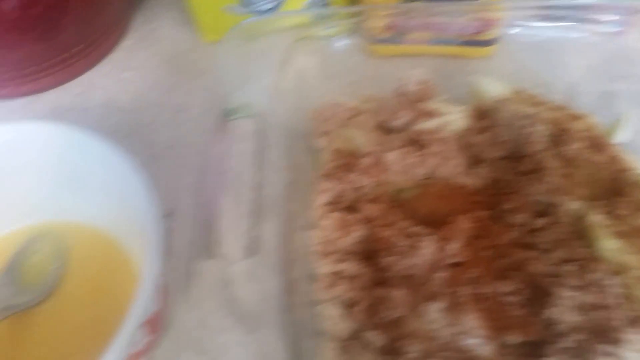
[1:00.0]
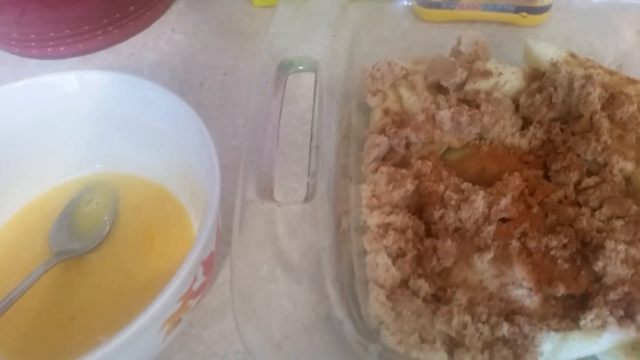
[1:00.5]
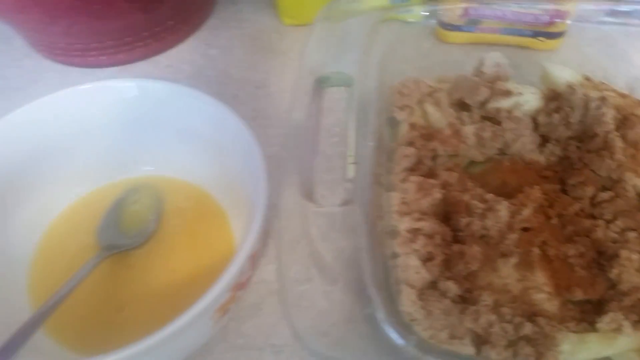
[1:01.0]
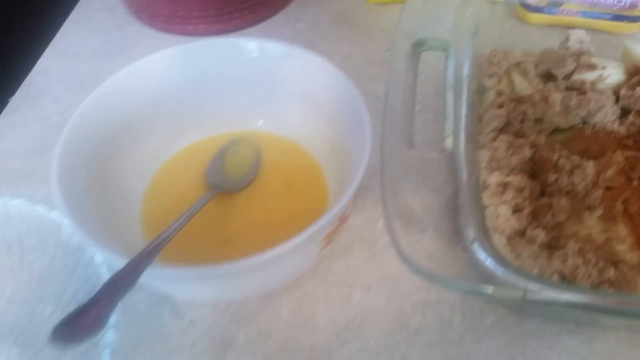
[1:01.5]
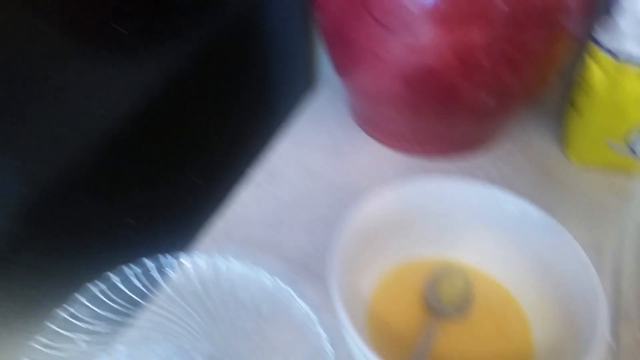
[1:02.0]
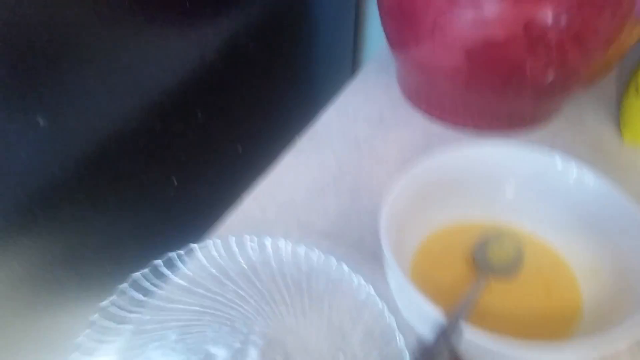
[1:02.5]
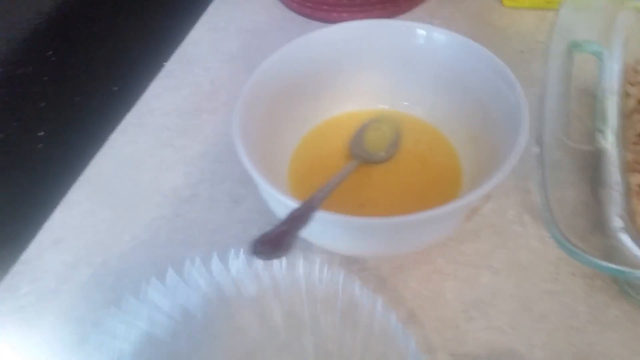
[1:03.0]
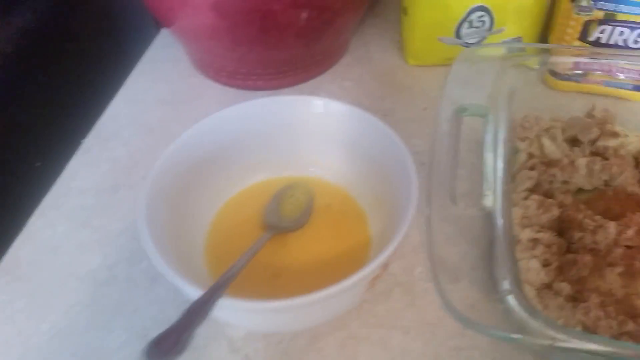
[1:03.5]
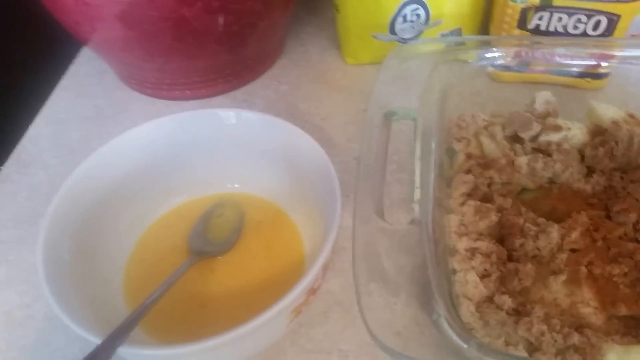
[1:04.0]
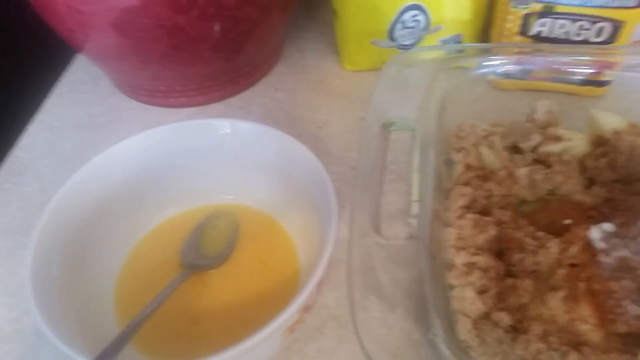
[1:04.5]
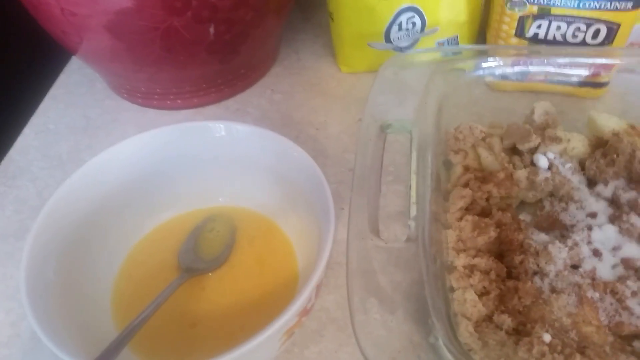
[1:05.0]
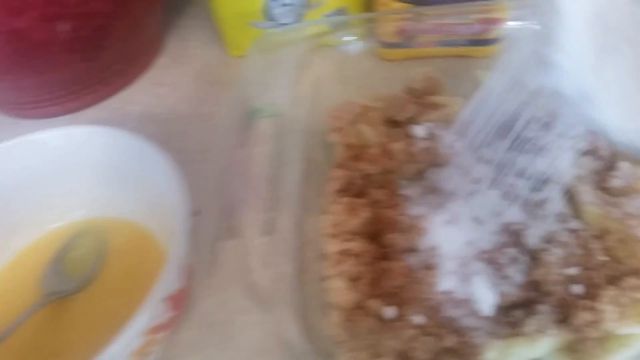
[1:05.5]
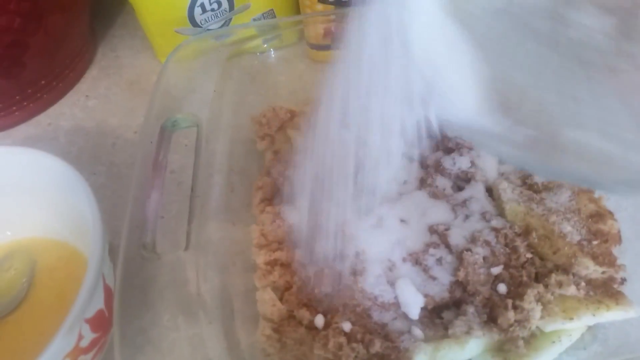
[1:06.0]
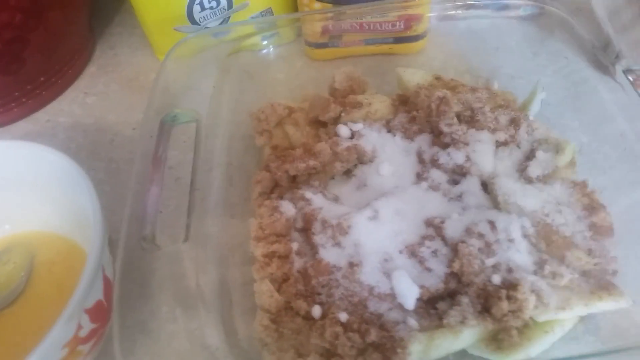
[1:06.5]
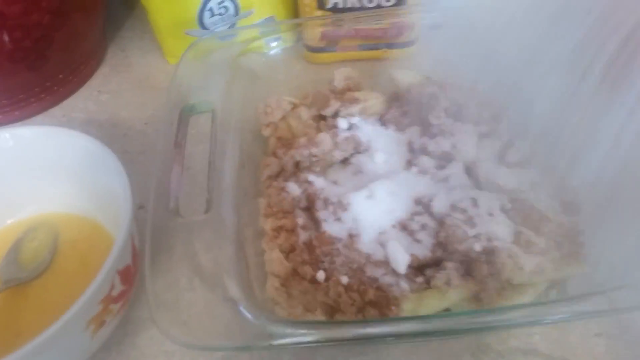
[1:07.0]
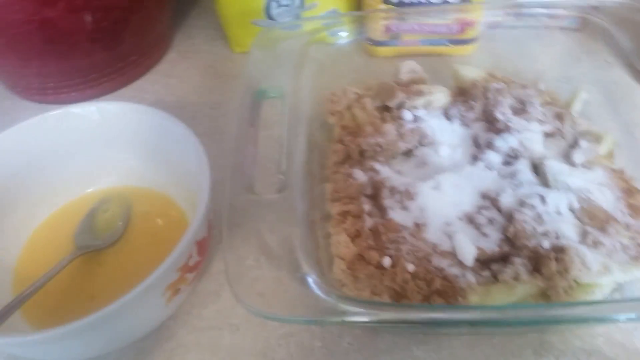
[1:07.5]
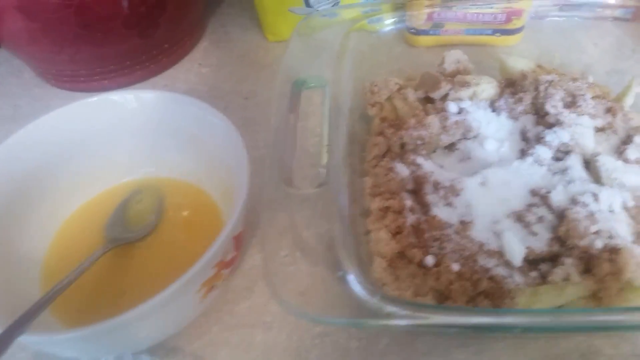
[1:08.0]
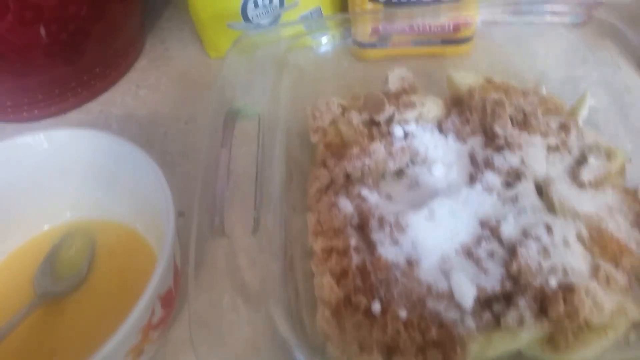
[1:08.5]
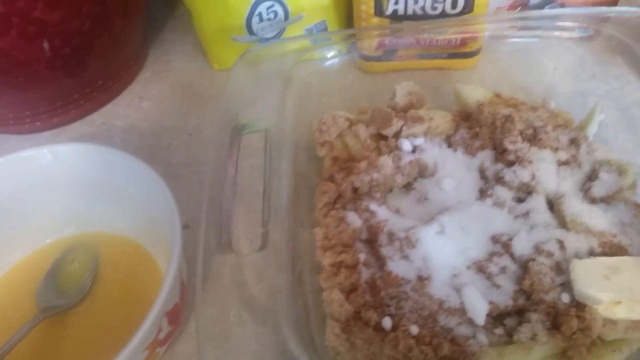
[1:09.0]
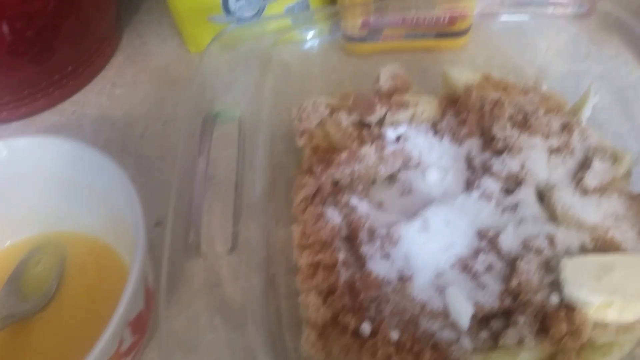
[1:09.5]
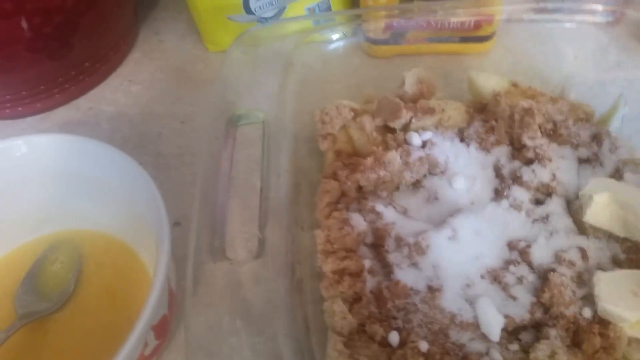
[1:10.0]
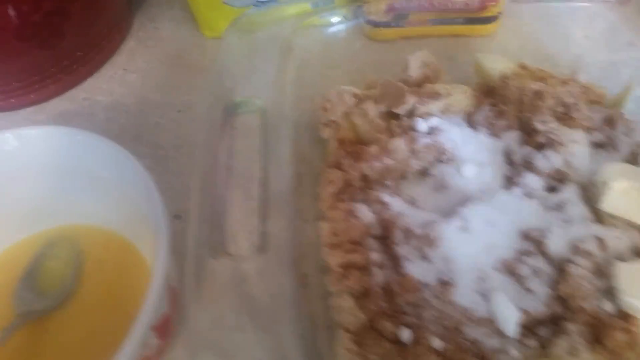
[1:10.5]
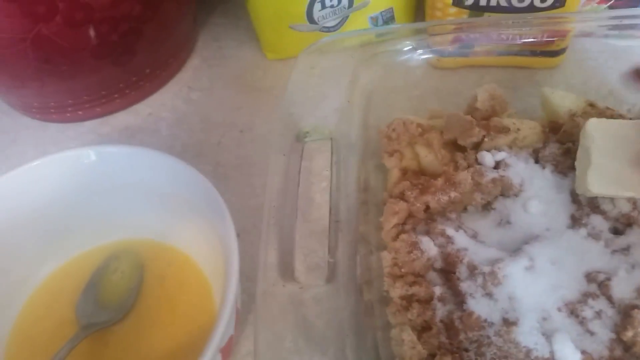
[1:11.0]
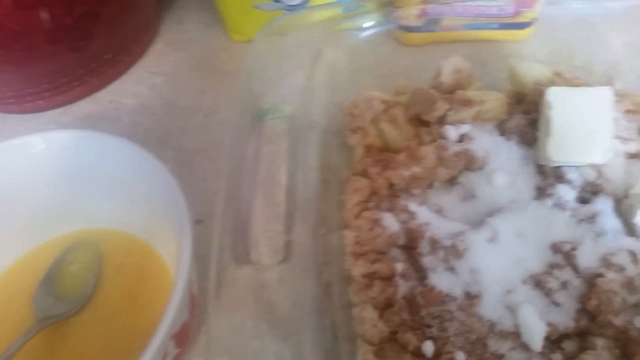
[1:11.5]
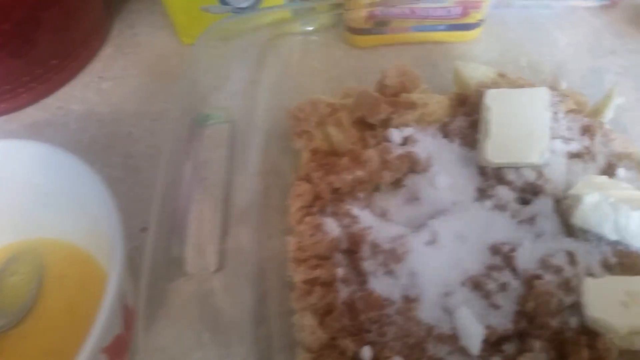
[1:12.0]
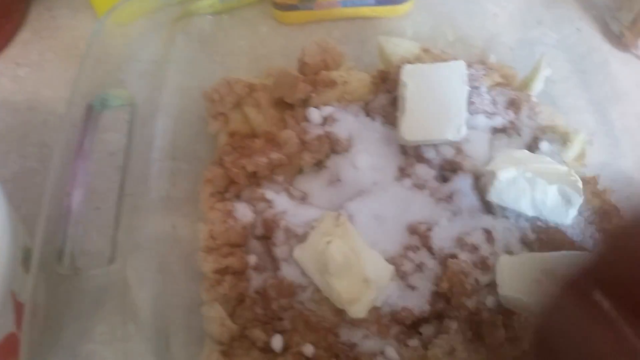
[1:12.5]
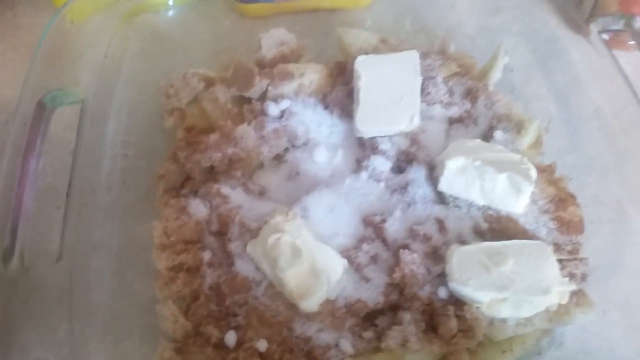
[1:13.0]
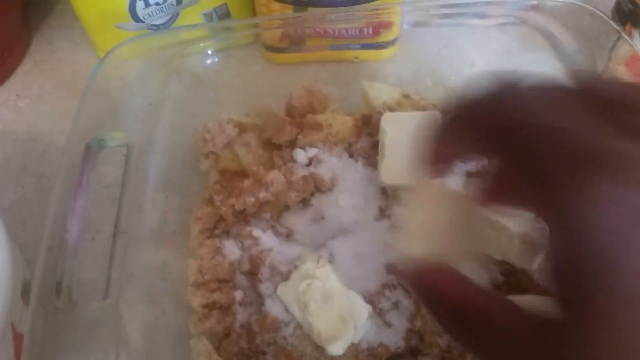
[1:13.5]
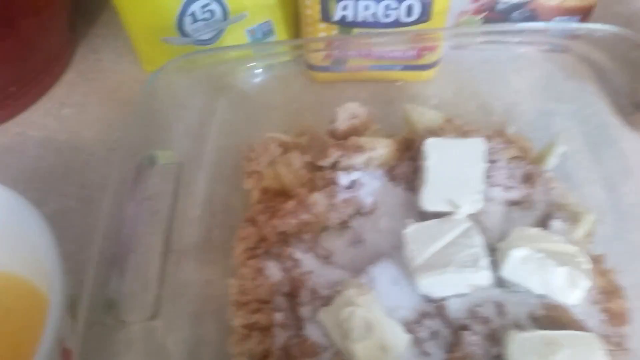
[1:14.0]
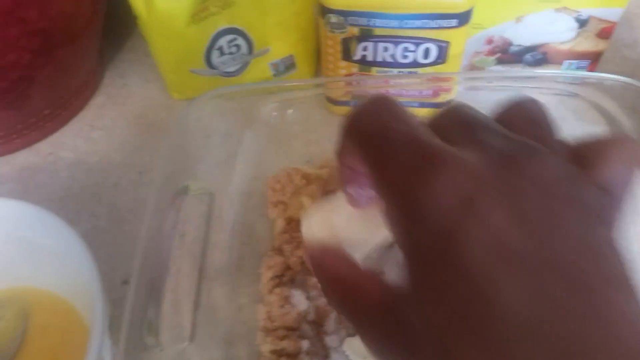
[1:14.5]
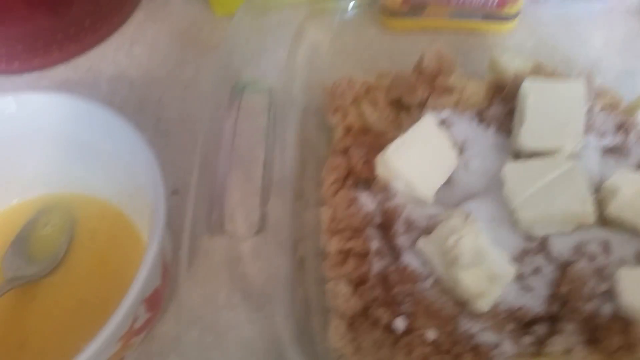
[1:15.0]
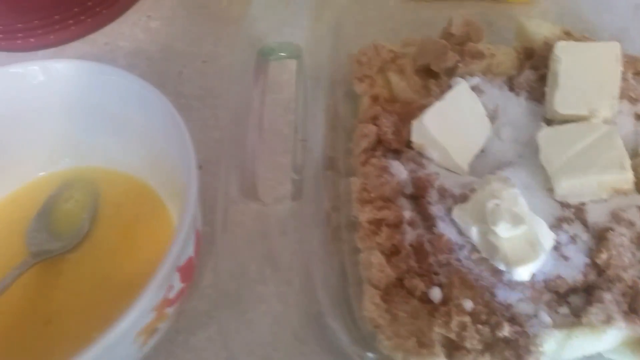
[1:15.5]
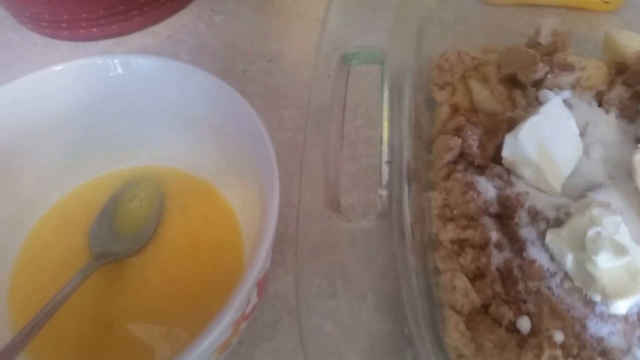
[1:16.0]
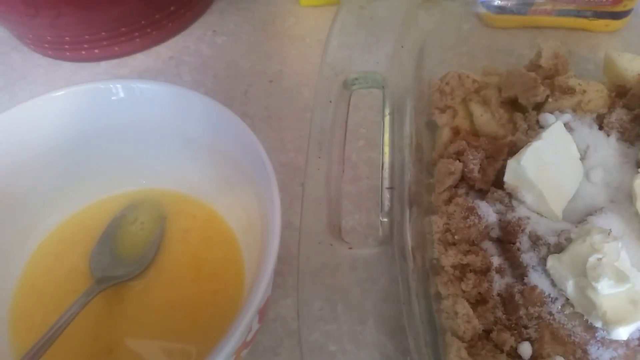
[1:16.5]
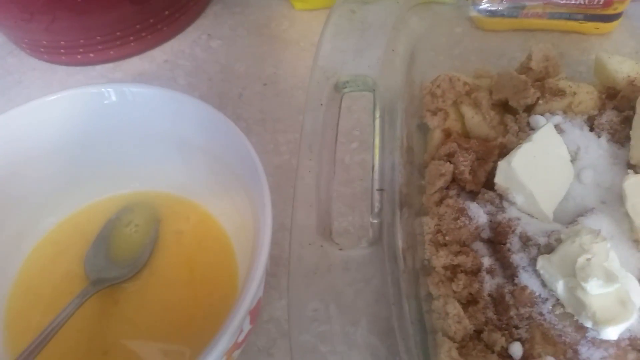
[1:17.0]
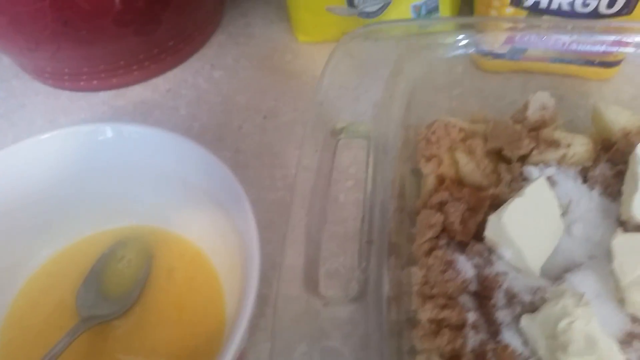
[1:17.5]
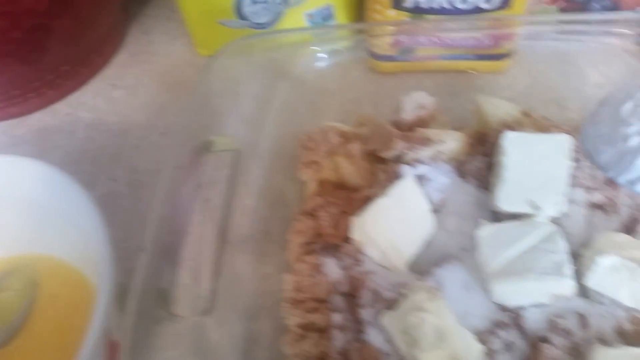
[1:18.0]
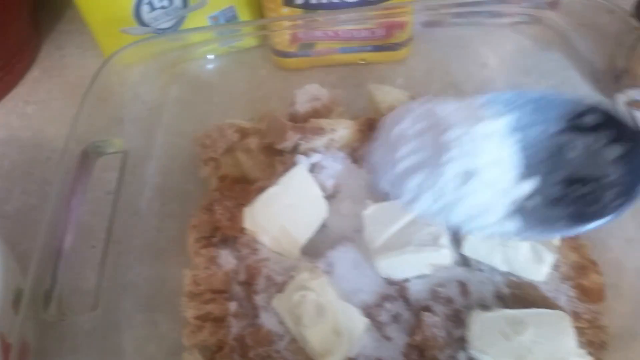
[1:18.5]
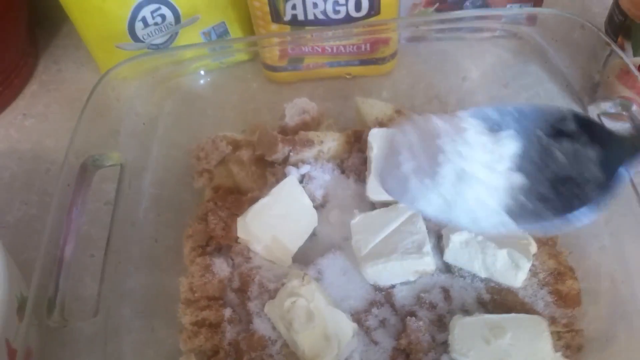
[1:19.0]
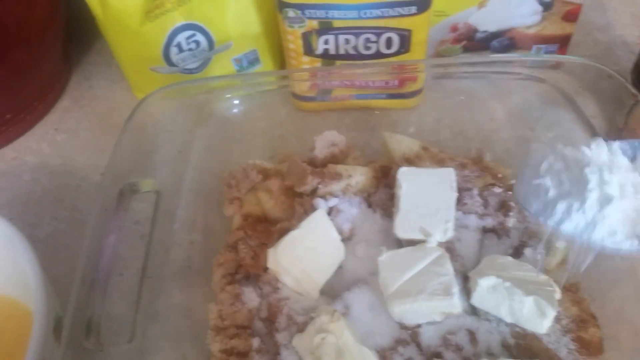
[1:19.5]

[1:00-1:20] A bowl of eggs has a spoon in it. White sugar, butter, and brown sugar are added to the glass dish, along with what seems to be baking soda or baking powder, building a sort of apple or crumble-style mix over the raw apples. No other people or animals appear.